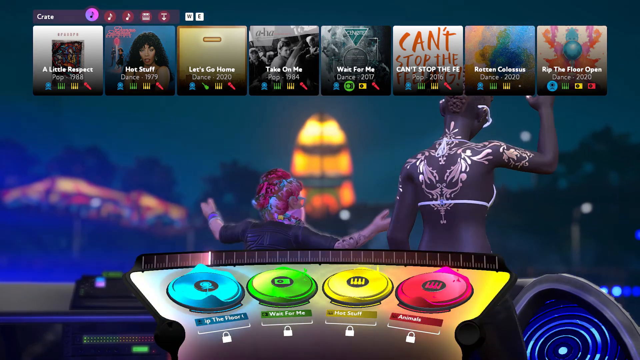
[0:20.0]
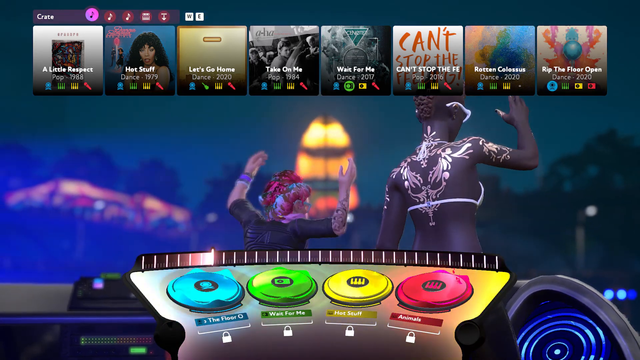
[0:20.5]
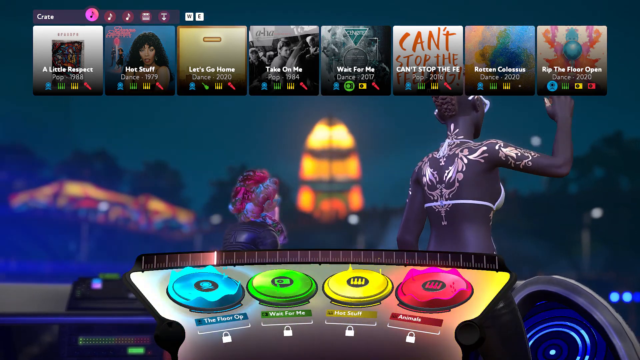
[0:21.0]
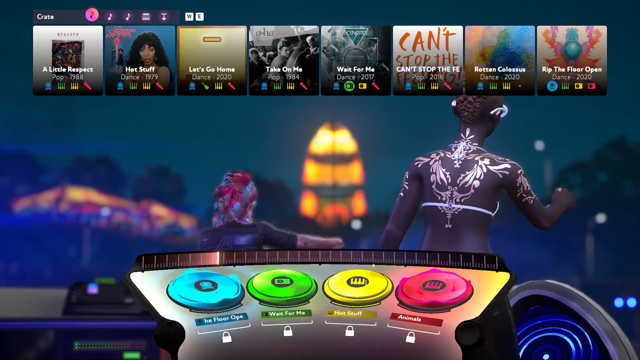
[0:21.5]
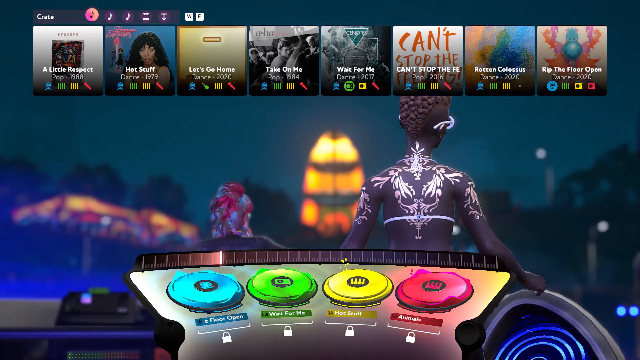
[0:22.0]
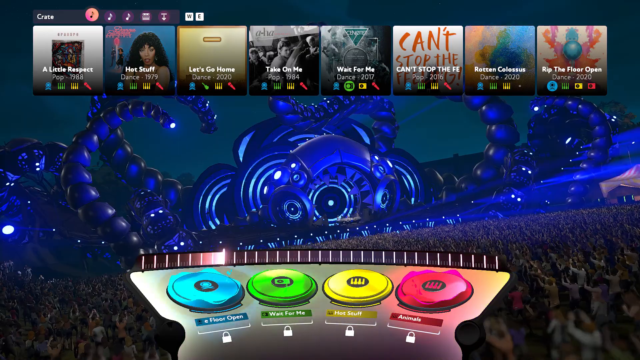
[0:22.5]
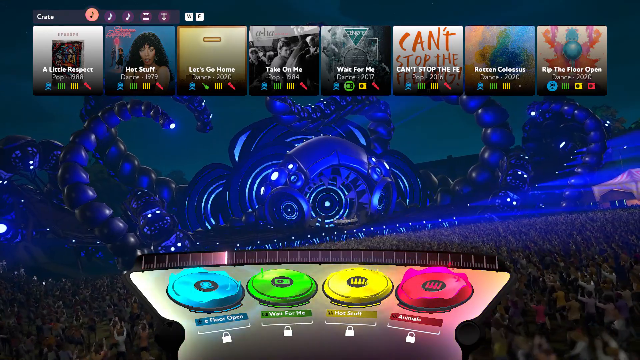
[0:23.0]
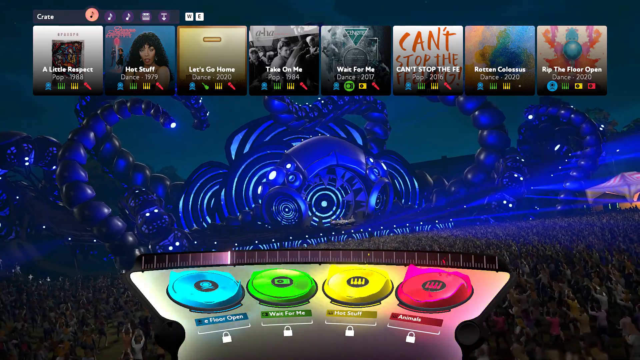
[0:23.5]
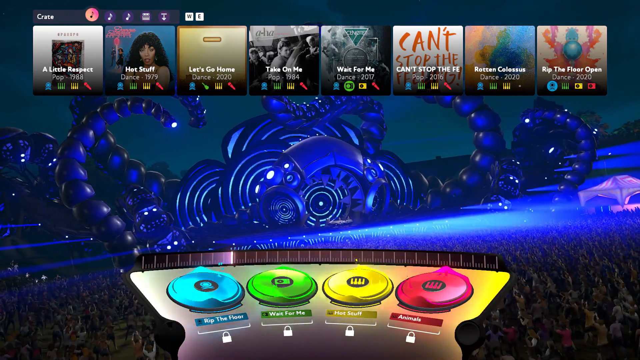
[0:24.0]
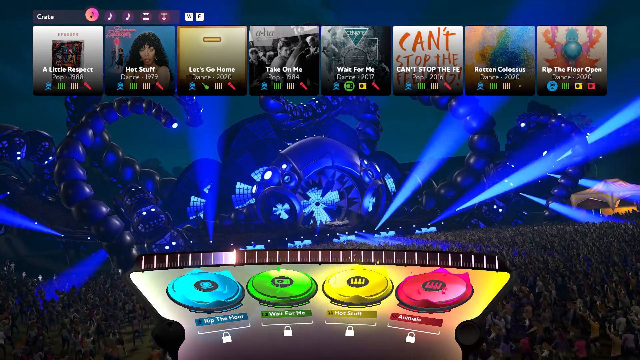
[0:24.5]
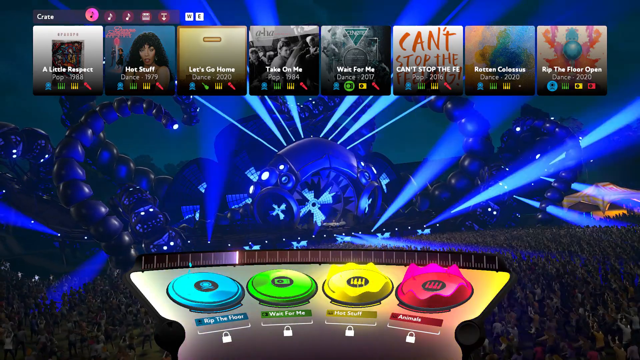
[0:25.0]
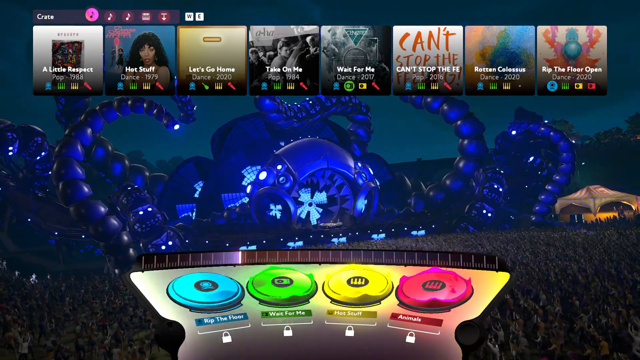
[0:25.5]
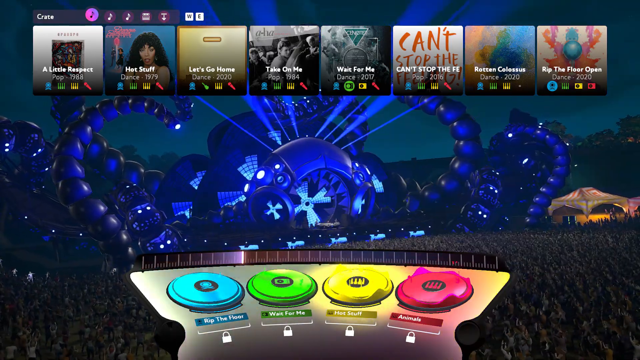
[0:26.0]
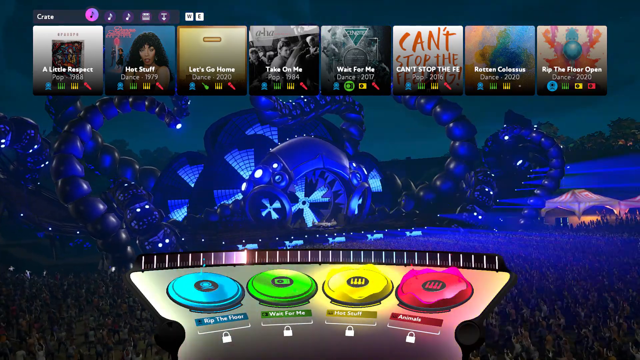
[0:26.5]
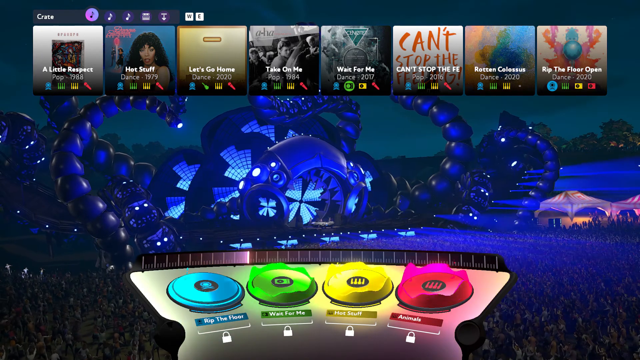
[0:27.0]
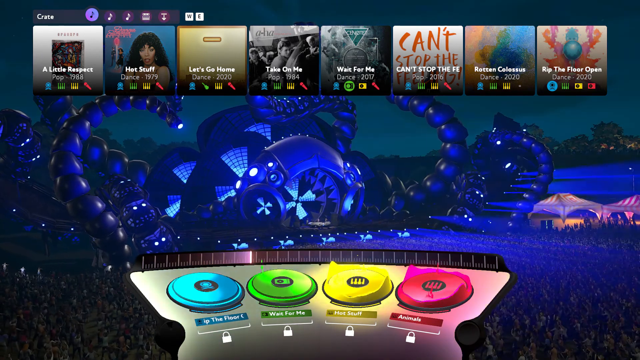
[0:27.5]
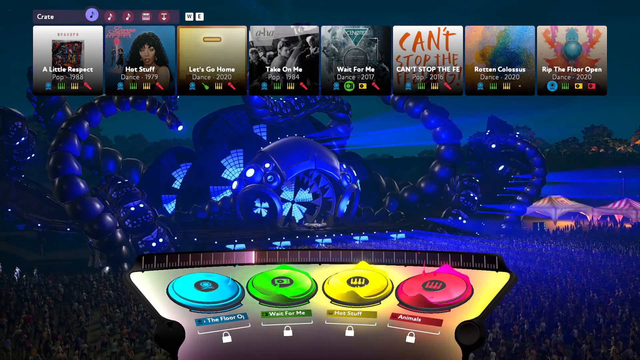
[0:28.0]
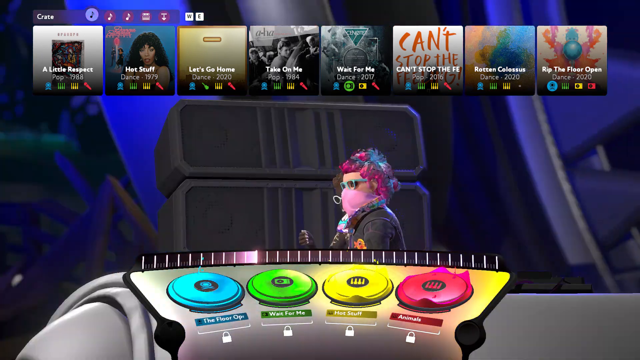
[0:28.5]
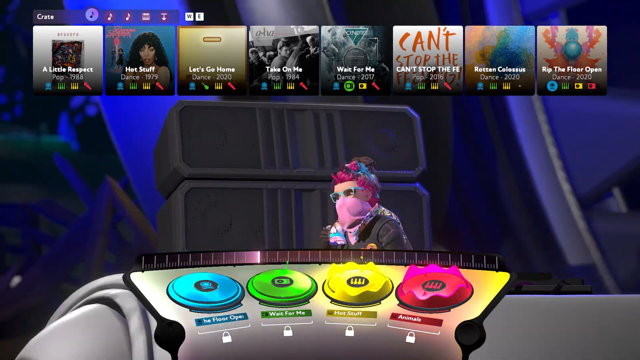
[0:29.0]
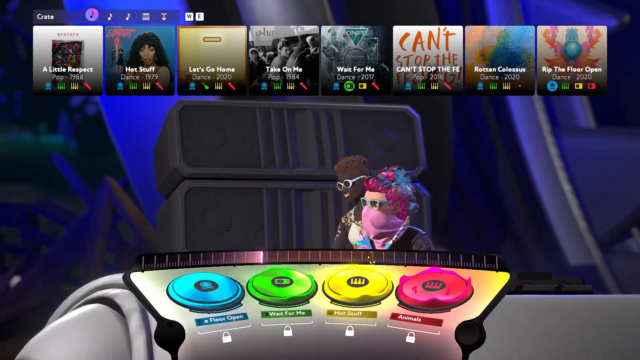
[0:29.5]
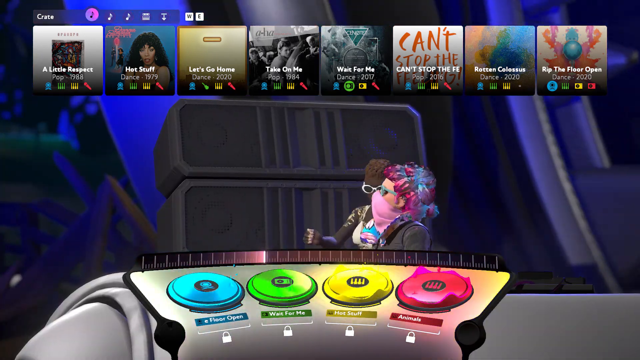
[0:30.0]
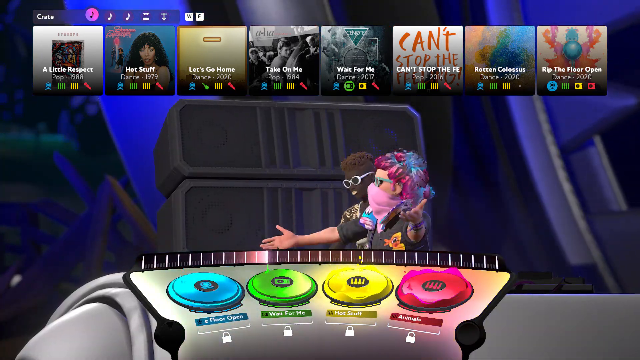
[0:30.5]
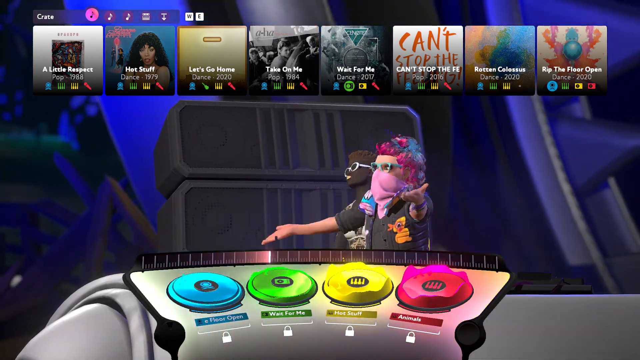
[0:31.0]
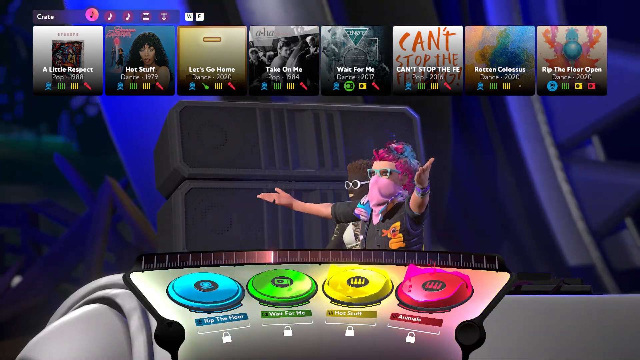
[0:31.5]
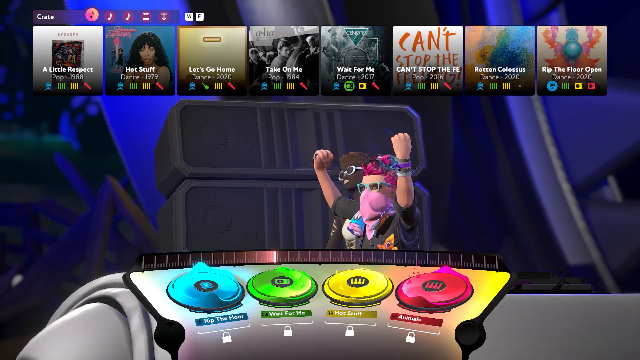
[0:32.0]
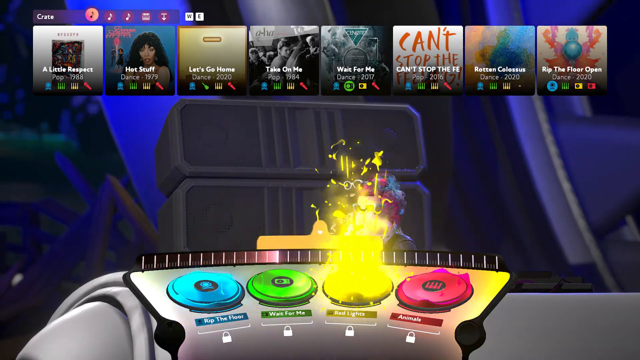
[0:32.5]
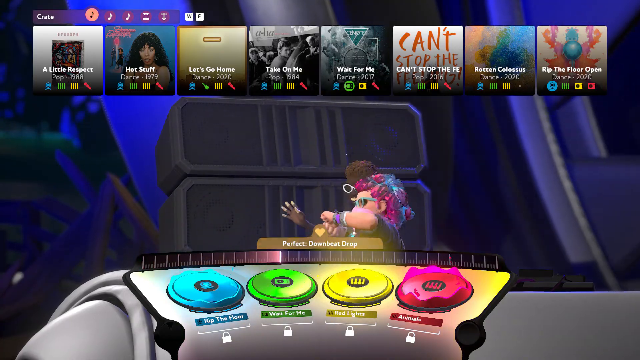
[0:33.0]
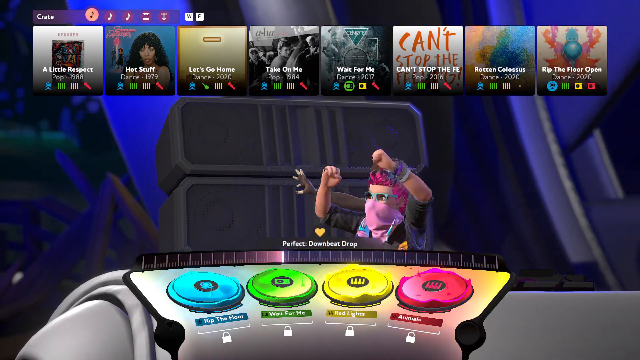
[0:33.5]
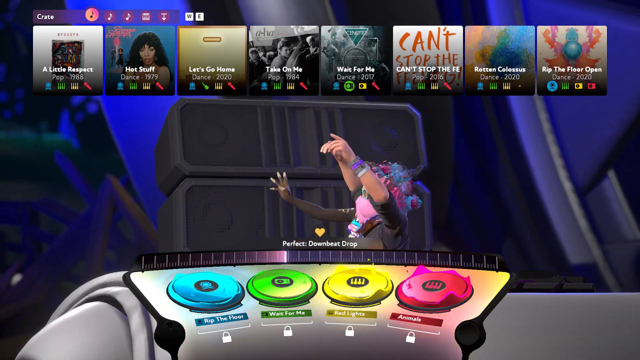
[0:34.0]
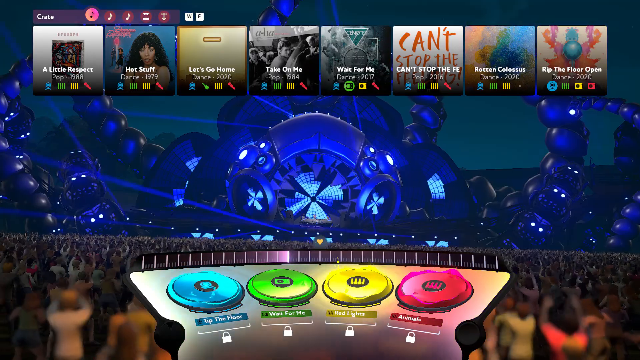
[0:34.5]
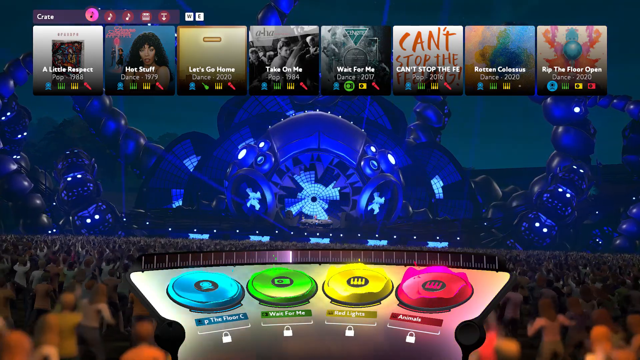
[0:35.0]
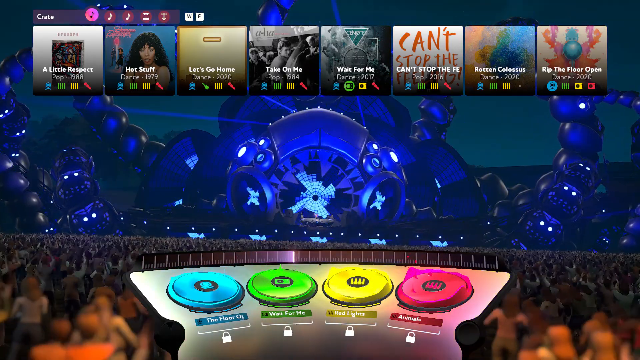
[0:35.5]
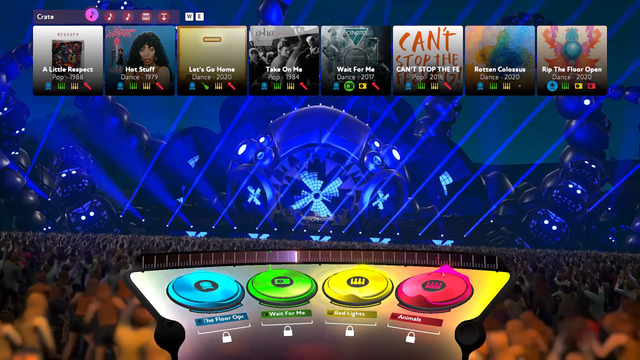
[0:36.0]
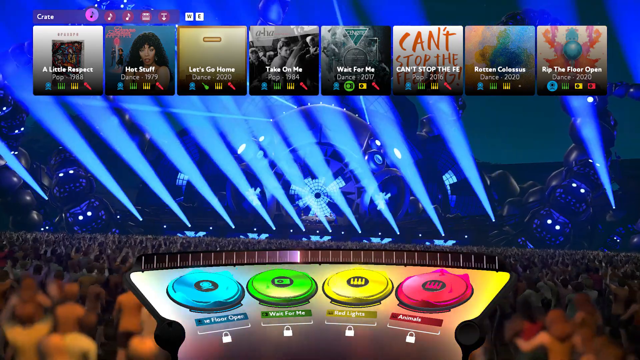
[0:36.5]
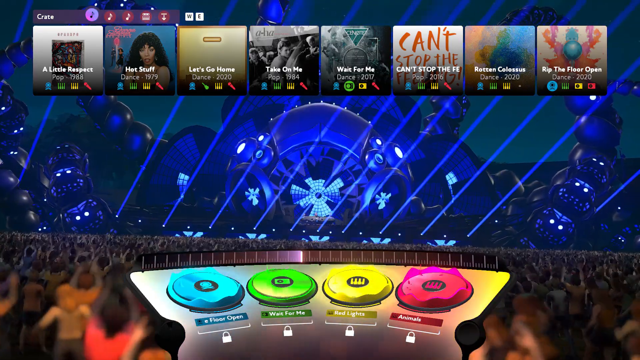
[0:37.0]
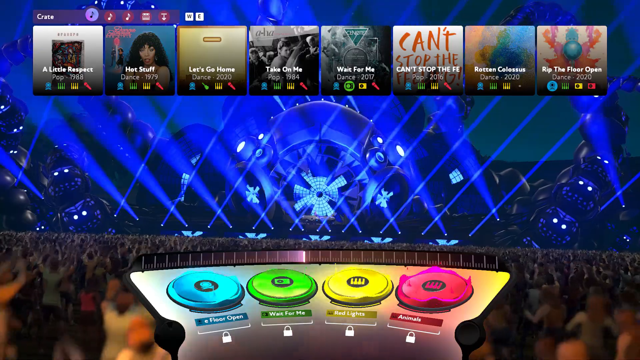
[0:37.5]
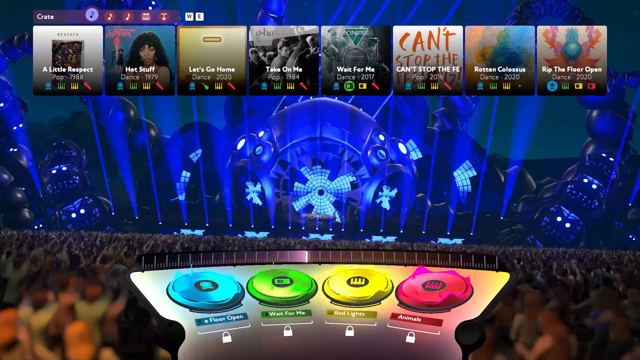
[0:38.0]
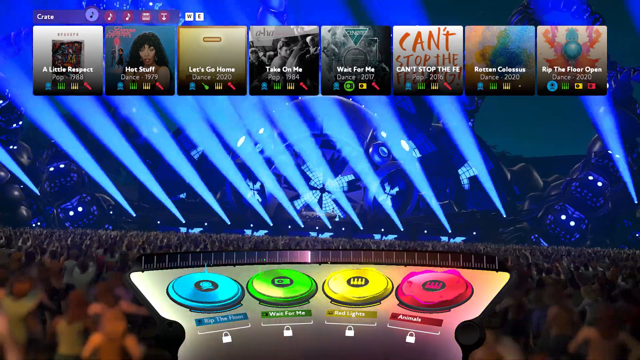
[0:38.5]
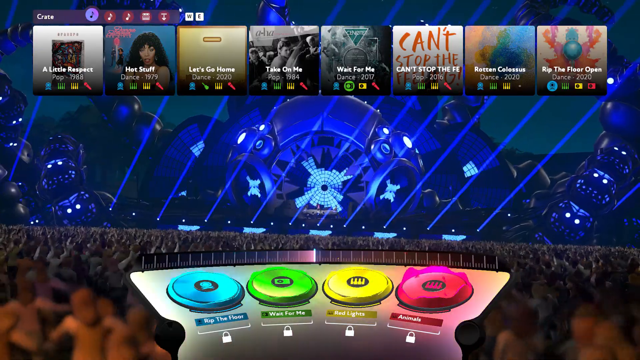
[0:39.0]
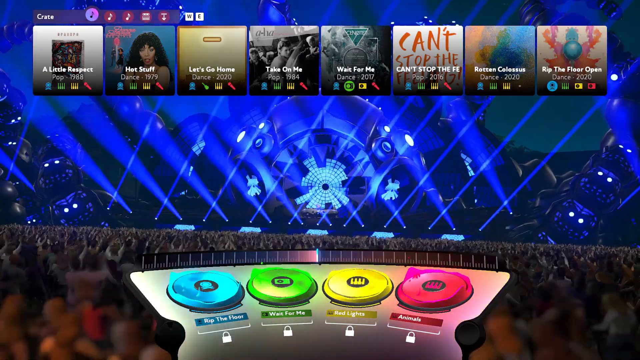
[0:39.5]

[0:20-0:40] Small words at the top show what look like single album covers with song titles: "a little respect", "hot stuff", "let's go home", "take on me", "wait for me", one beginning "can't stop" that apparently continues with "feeling", and "rip the floor open". Below is the DJ area, lit in light blue, green, yellow and a reddish pinkish color. A huge crowd of people is dancing. The stage looks like an octopus or a snake with tentacles. The DJ, whose gender is unclear, has pink, purple and magenta colored hair, a scarf covering the face from the nose down, and sunglasses.